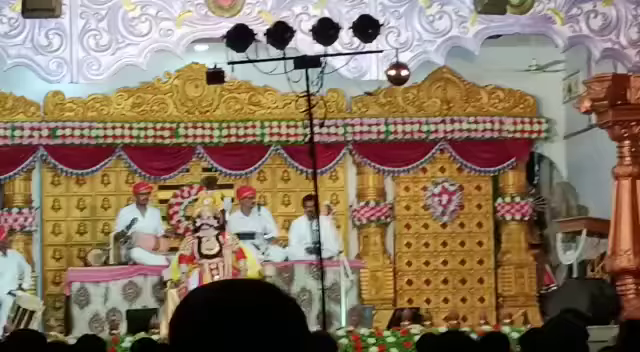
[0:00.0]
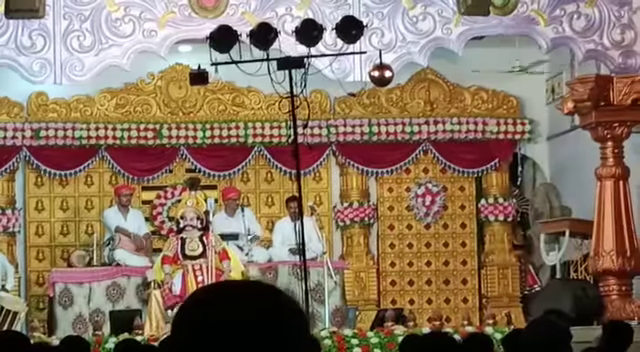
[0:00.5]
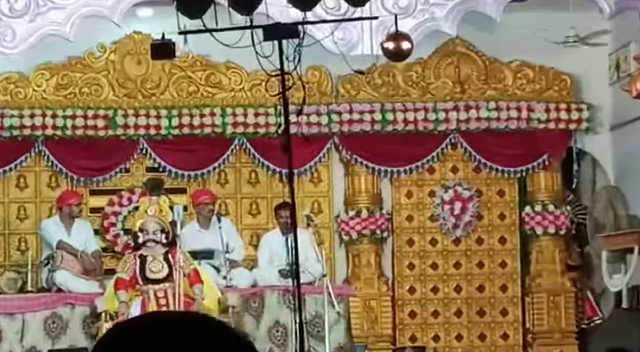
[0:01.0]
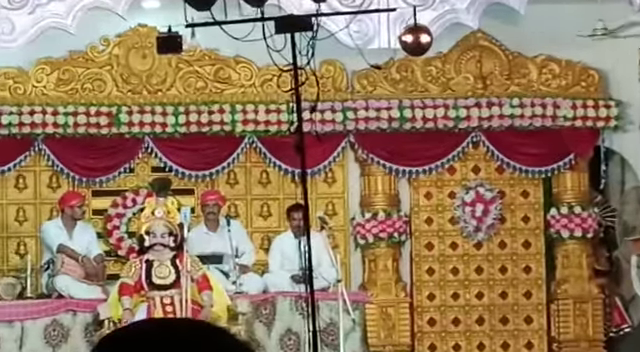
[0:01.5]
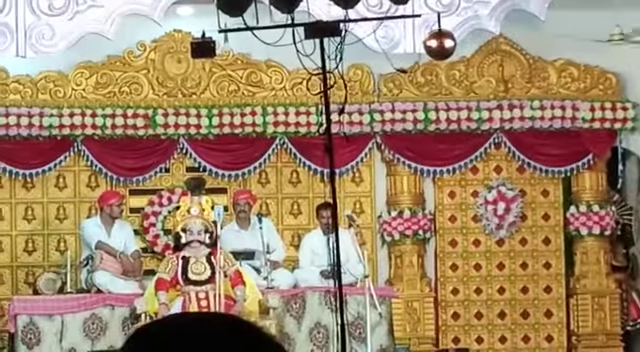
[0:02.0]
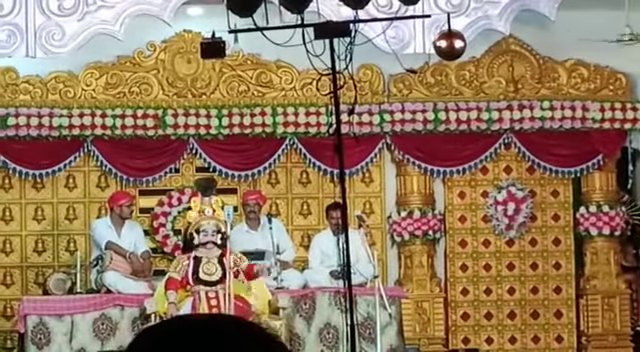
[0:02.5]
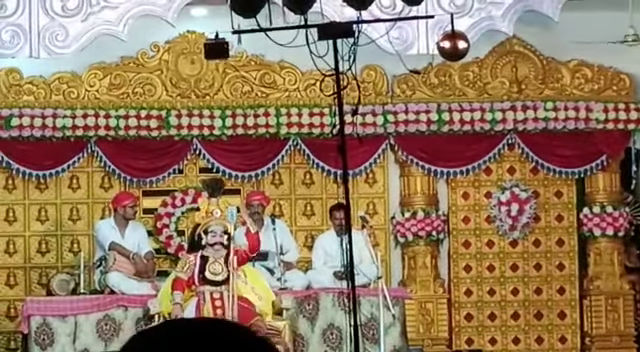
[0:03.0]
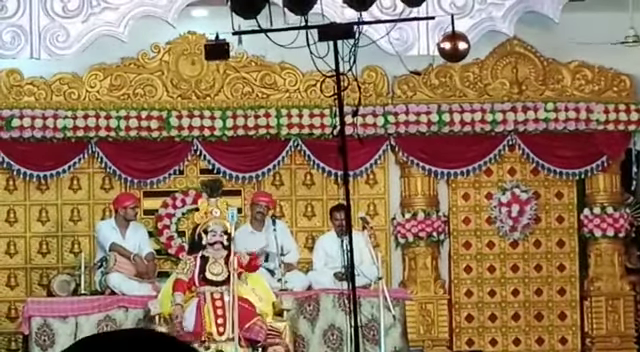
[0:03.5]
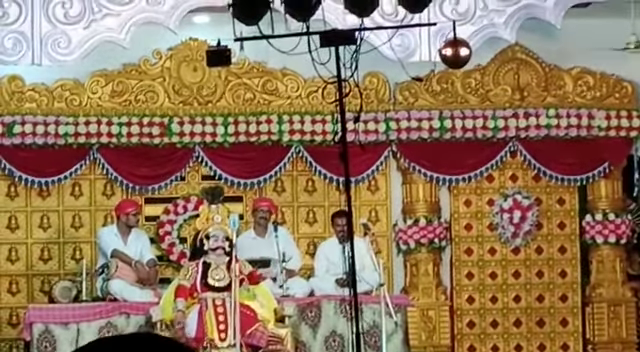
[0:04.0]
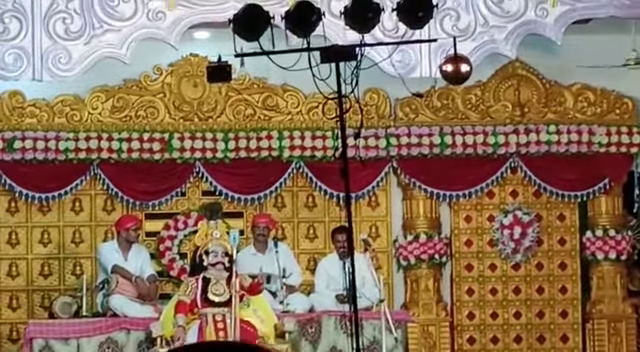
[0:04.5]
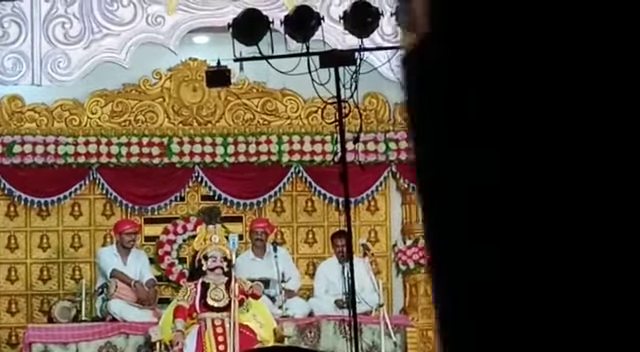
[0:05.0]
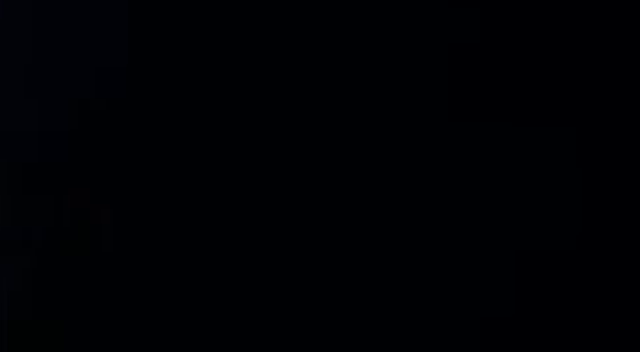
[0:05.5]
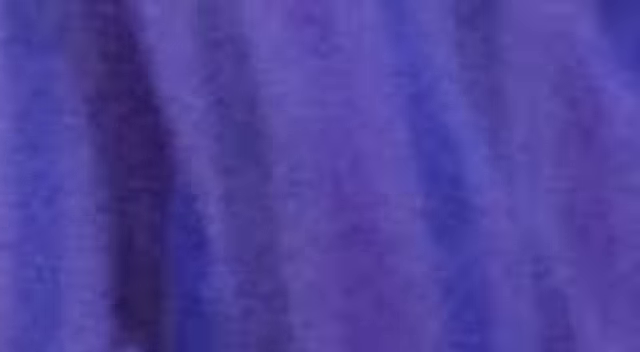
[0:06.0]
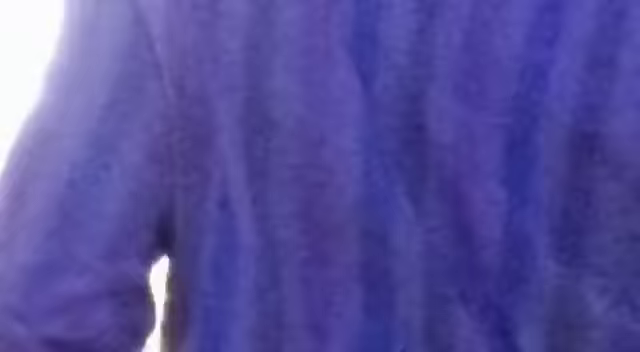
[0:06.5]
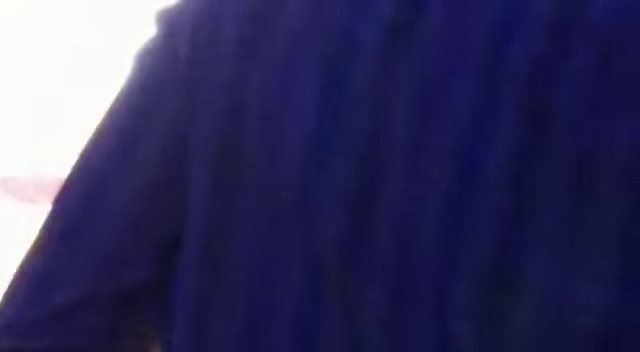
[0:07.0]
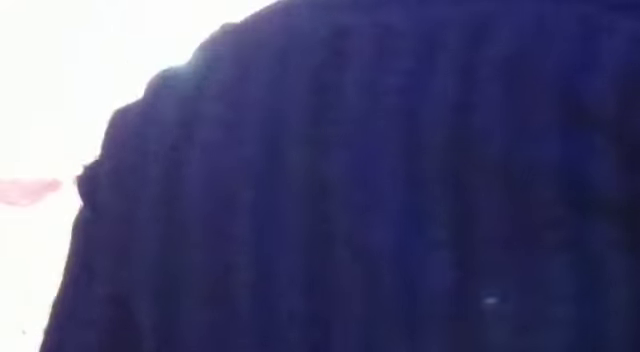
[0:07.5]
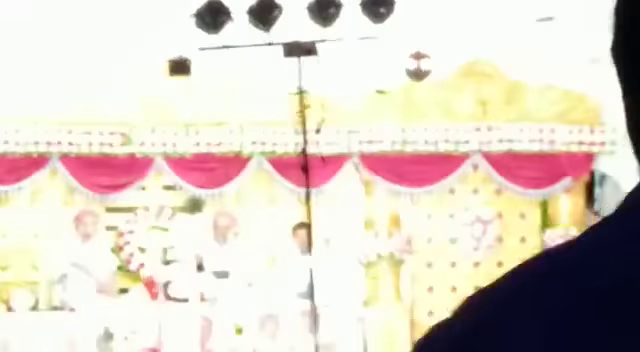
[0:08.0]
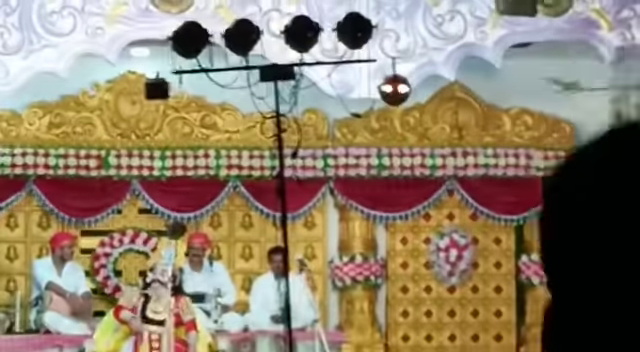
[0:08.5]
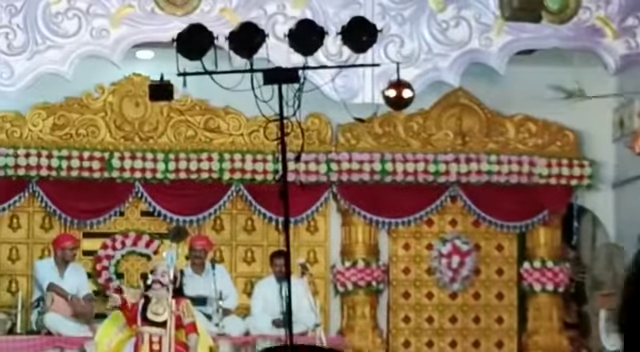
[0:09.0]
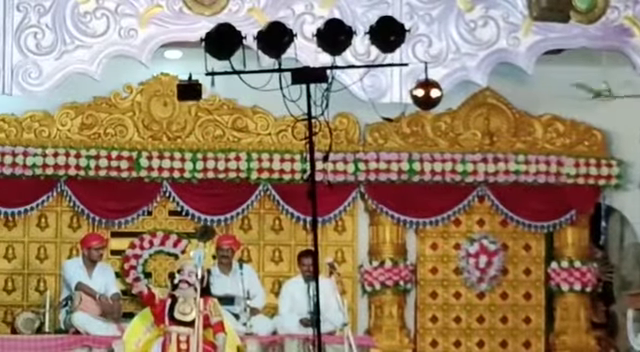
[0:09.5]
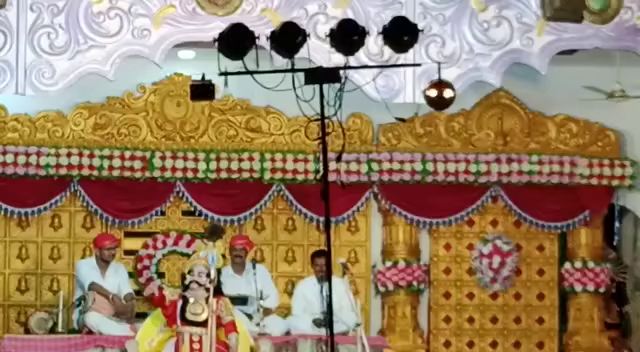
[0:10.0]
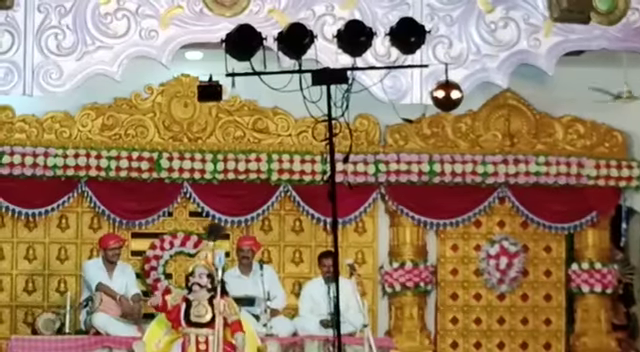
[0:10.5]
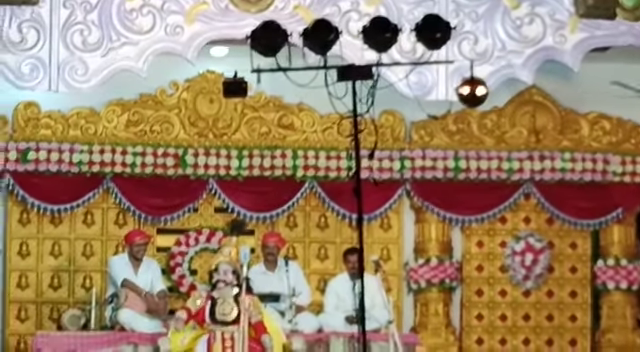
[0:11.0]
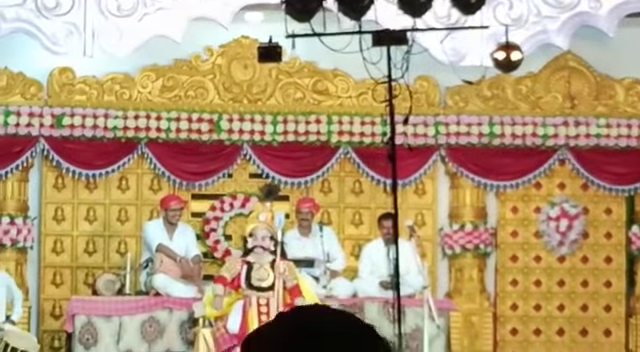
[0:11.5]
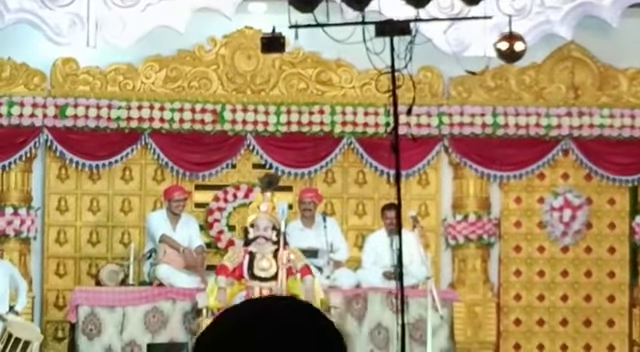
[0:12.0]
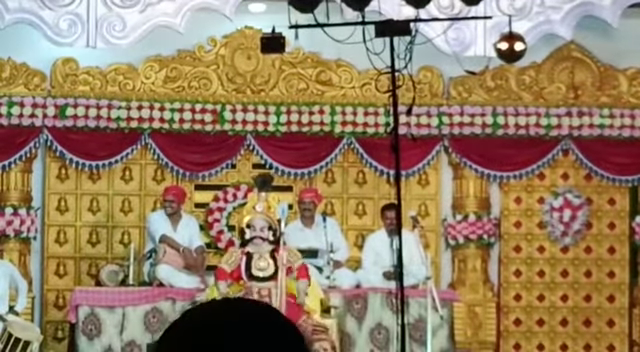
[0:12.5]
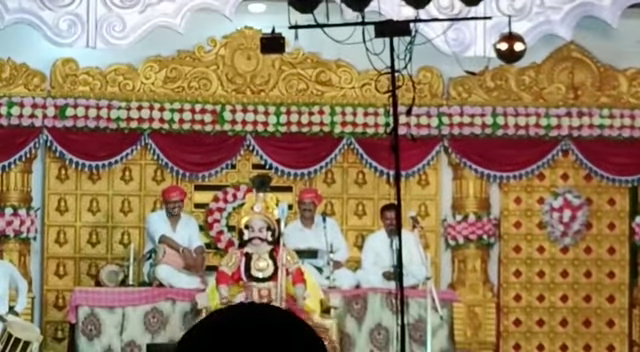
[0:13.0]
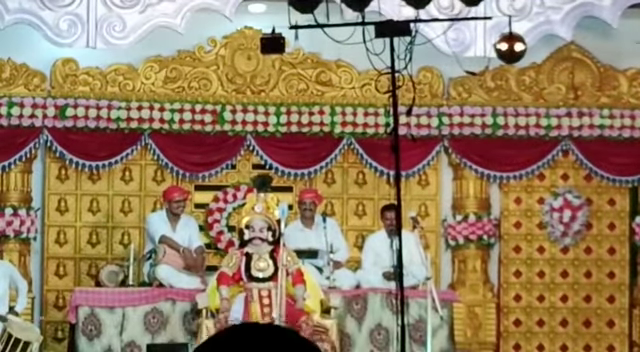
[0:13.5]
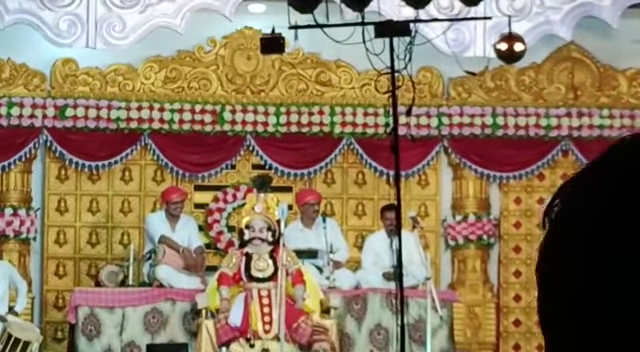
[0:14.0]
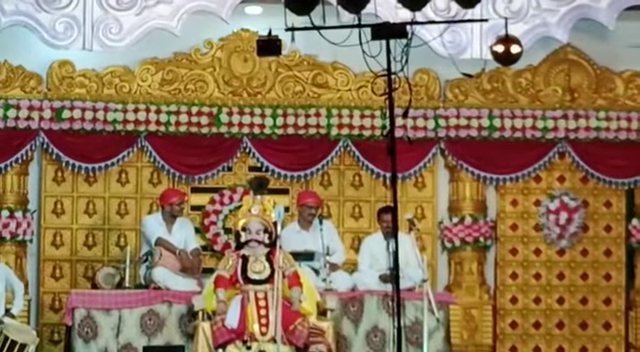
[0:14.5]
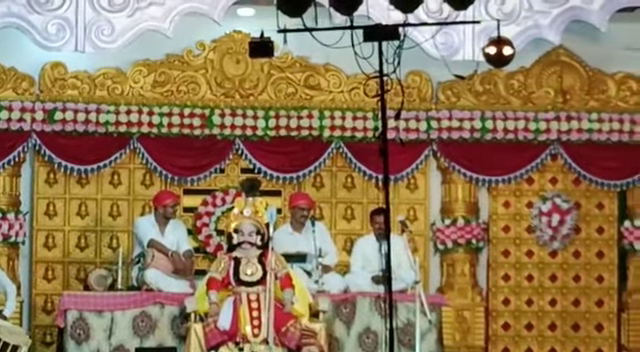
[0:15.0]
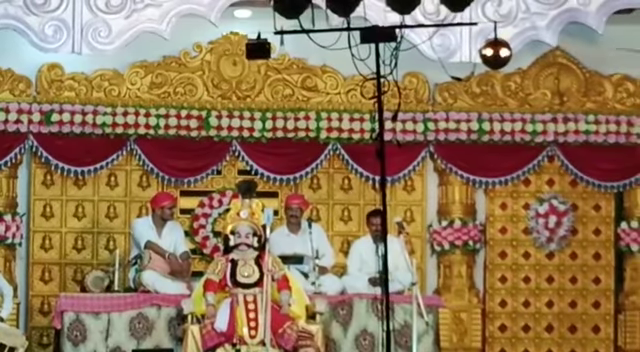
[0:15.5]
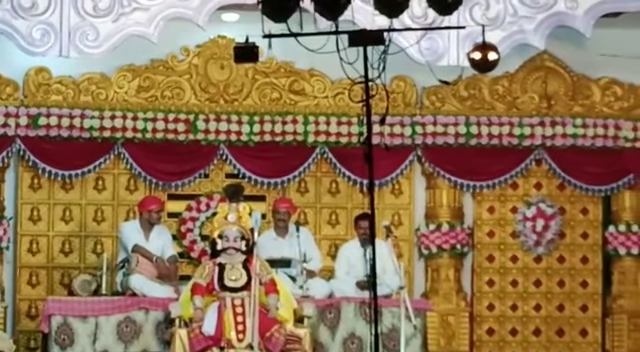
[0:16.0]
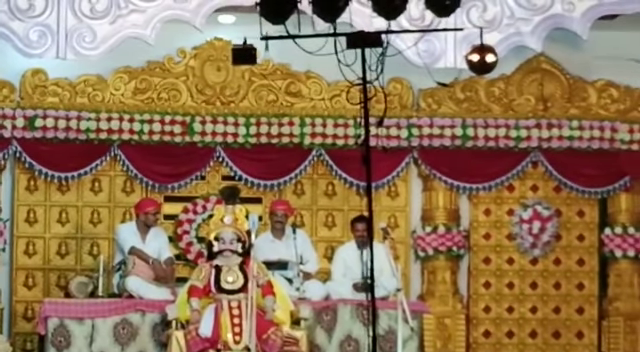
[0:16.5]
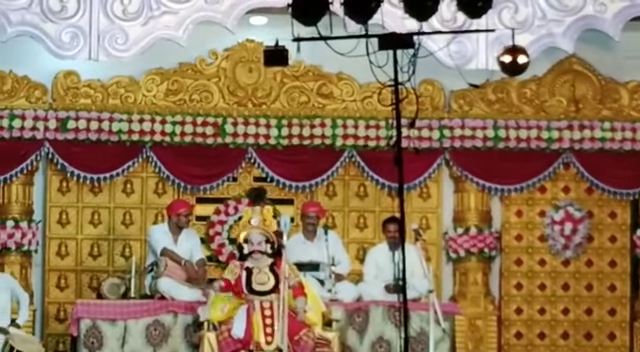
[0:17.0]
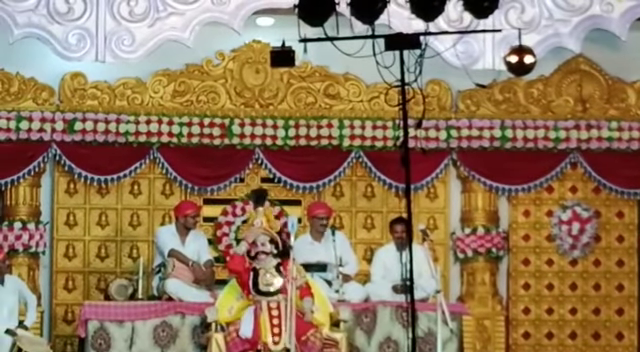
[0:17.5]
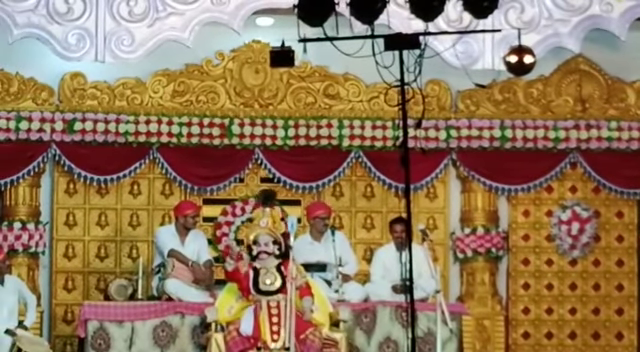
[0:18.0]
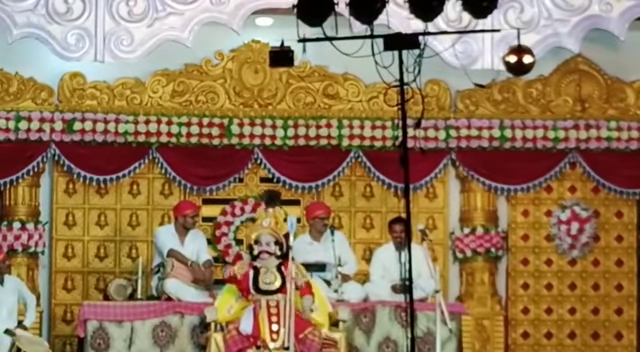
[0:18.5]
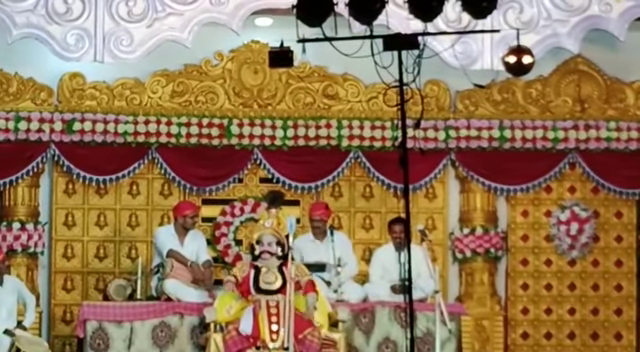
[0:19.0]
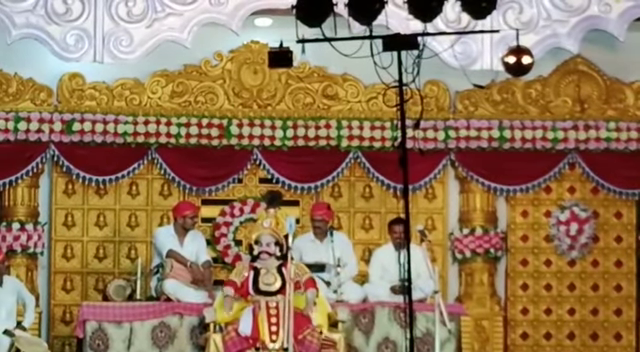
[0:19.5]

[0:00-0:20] People who appear to be in Indian attire are dressed up, festive and decorated; it might be some type of play, musical or concert. They wear turbans and Indian attire, and there is some type of Indian god figure at the front. It appears to be a stage with lights on it. The stage is very decorative, gold and red, with ornate designs on it.